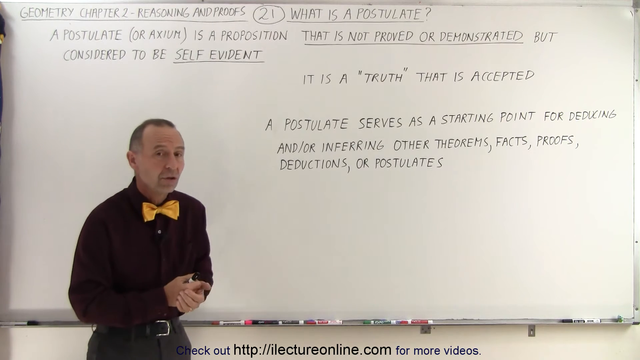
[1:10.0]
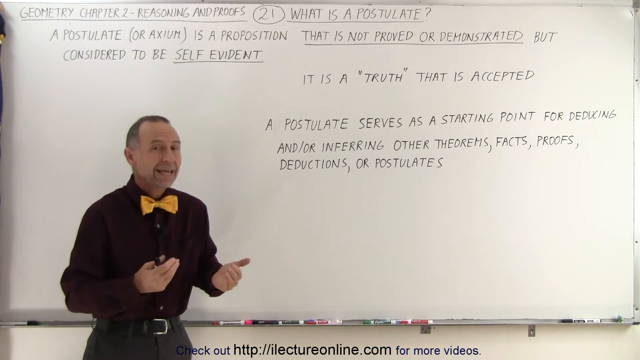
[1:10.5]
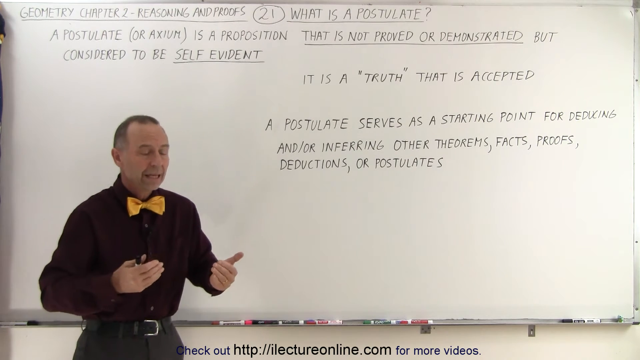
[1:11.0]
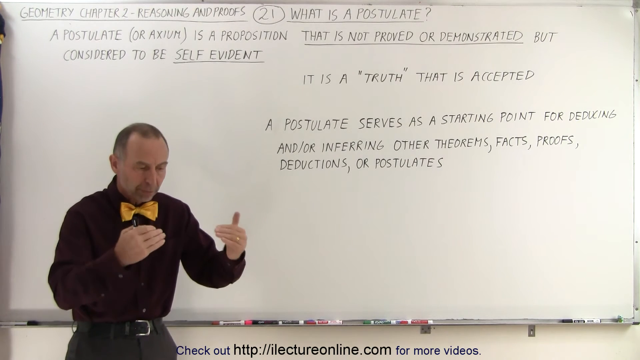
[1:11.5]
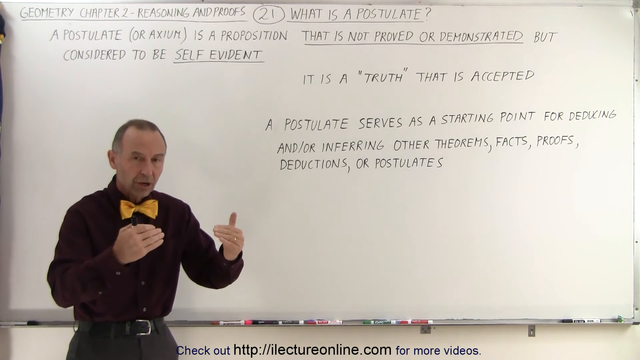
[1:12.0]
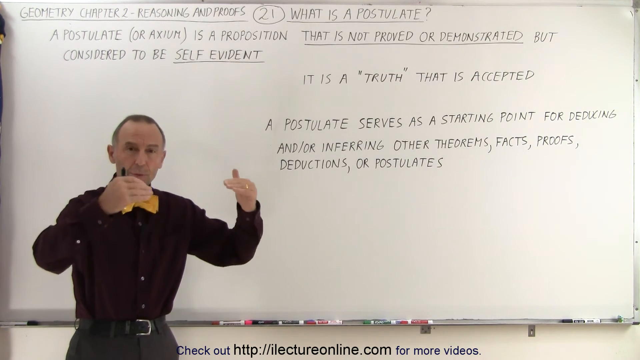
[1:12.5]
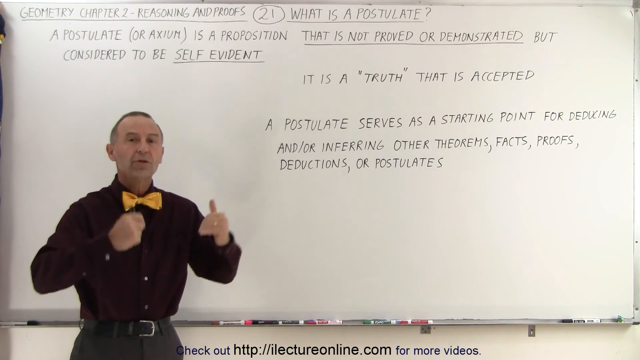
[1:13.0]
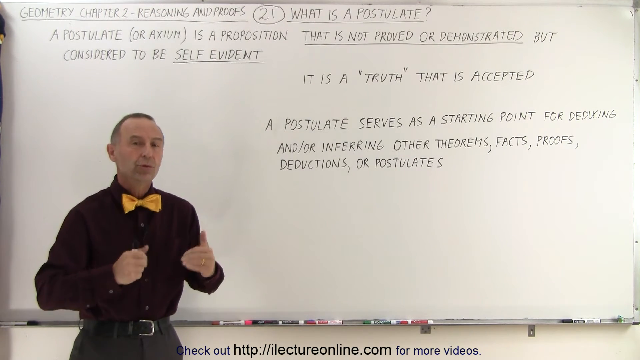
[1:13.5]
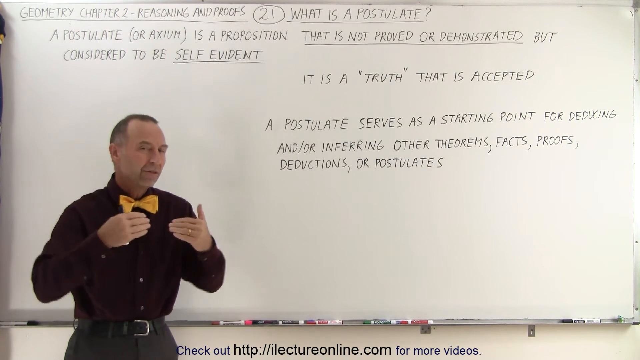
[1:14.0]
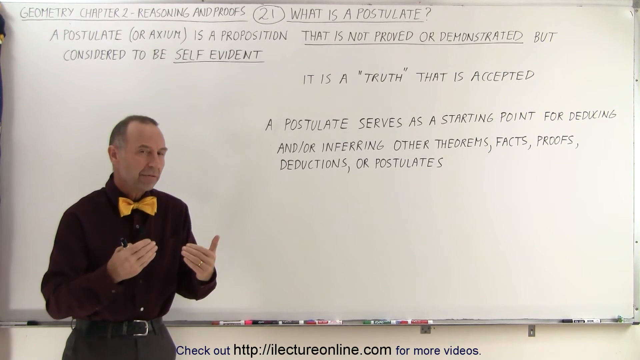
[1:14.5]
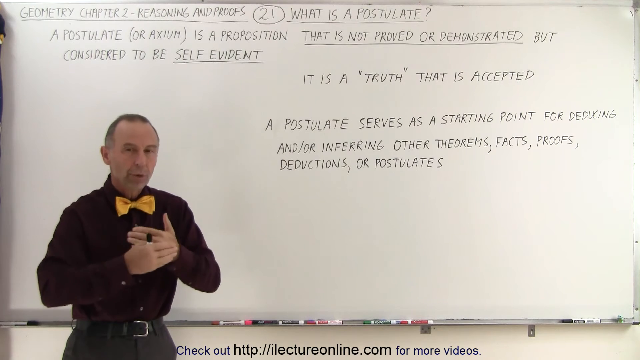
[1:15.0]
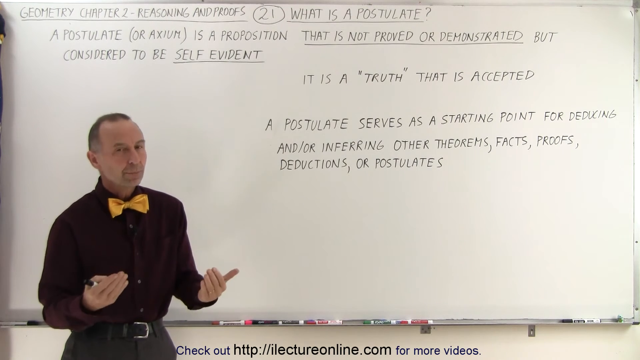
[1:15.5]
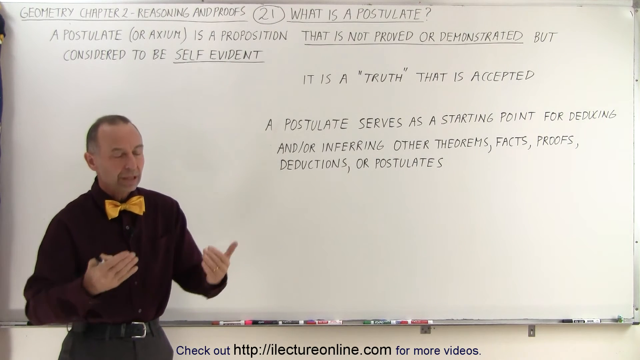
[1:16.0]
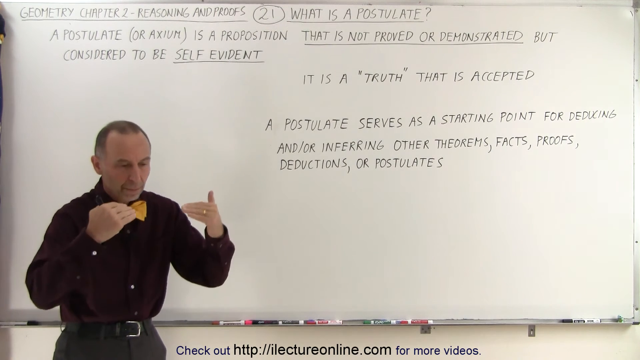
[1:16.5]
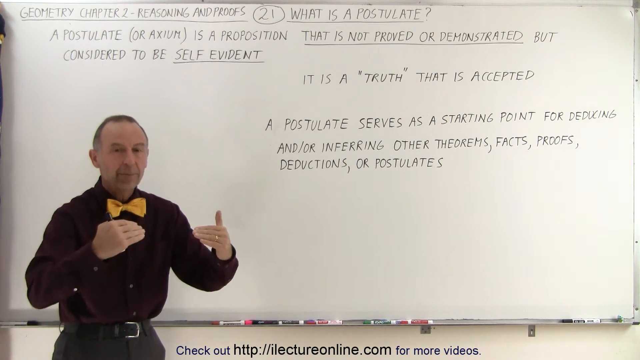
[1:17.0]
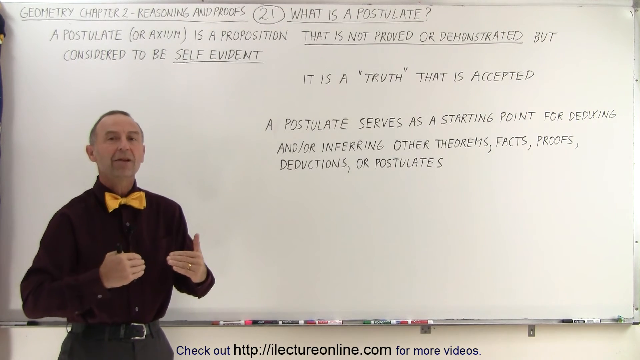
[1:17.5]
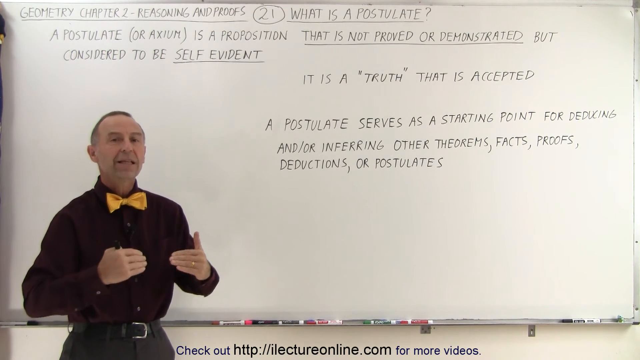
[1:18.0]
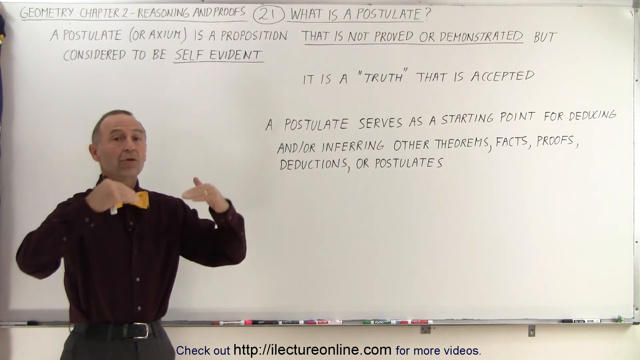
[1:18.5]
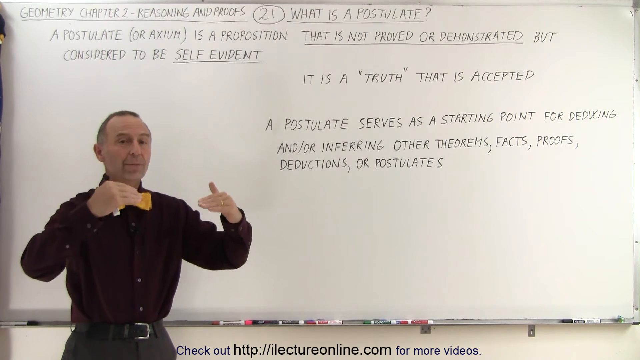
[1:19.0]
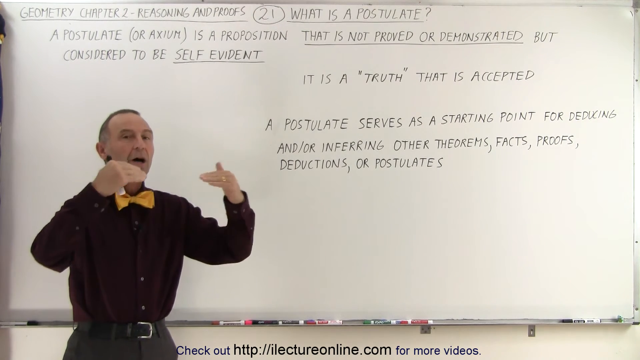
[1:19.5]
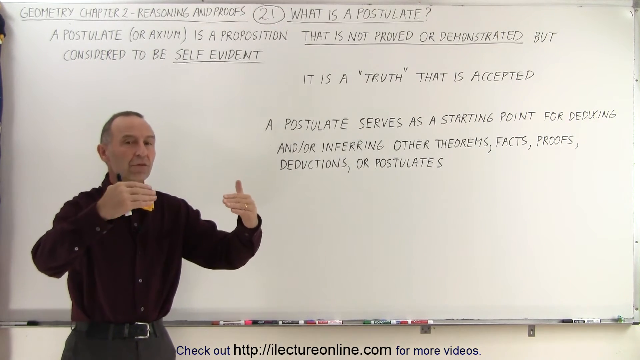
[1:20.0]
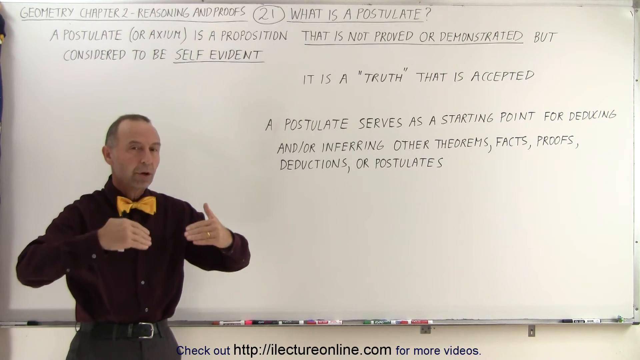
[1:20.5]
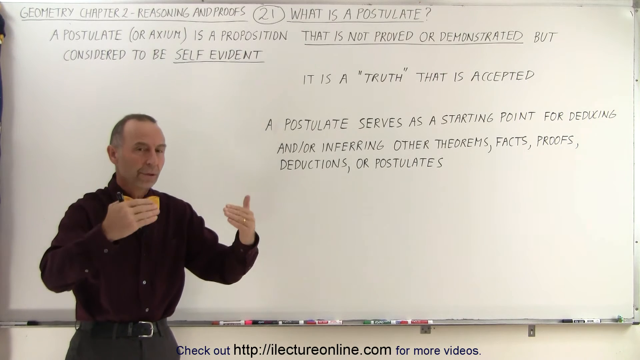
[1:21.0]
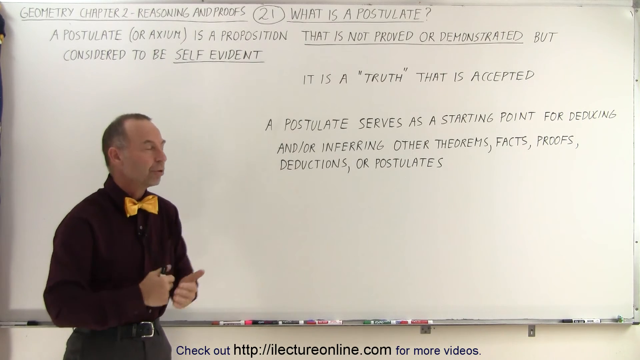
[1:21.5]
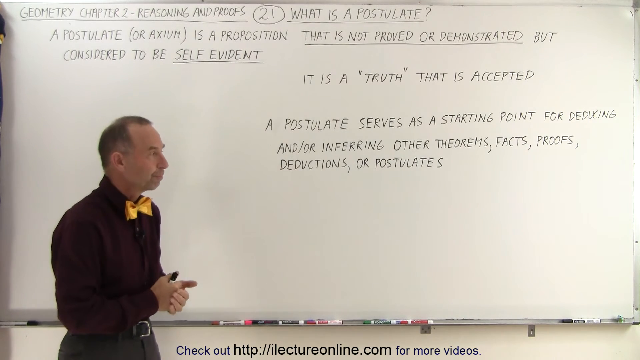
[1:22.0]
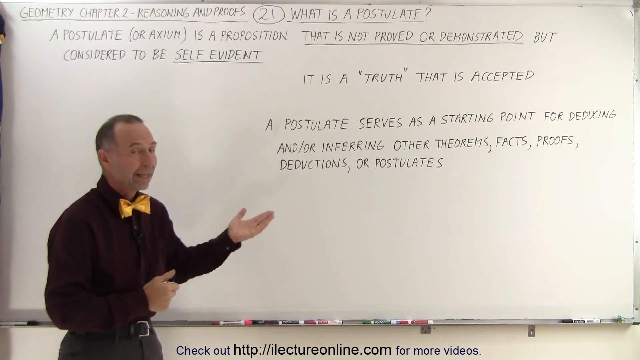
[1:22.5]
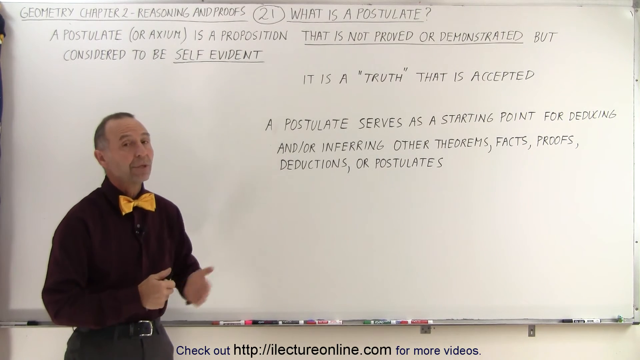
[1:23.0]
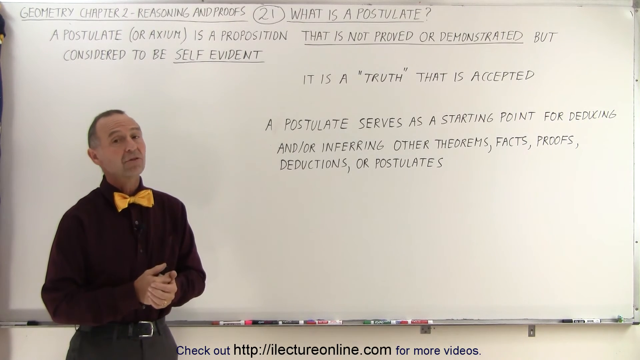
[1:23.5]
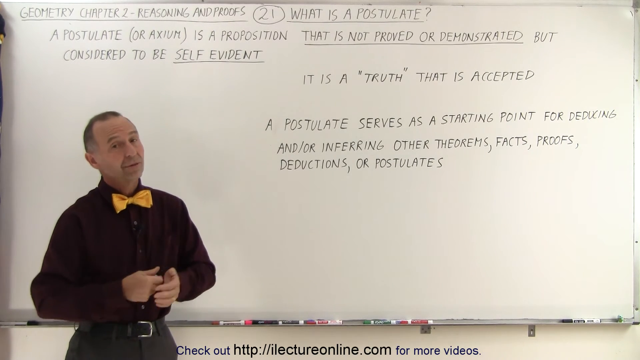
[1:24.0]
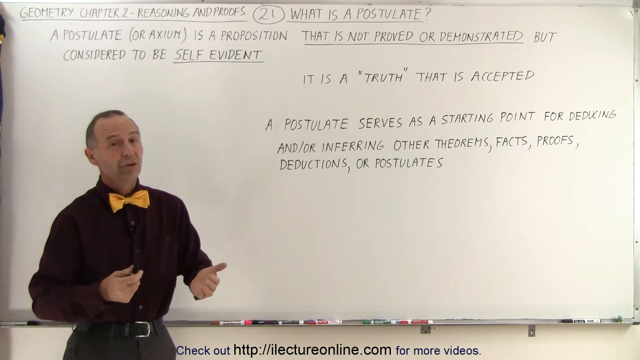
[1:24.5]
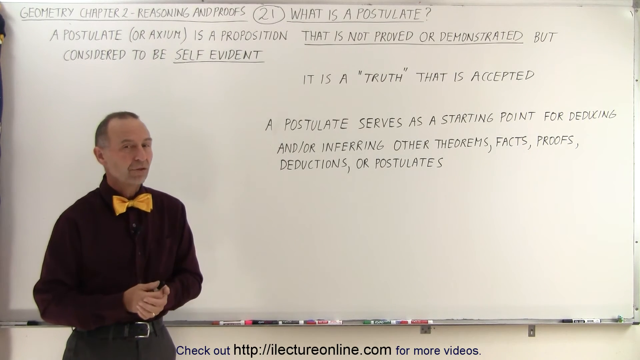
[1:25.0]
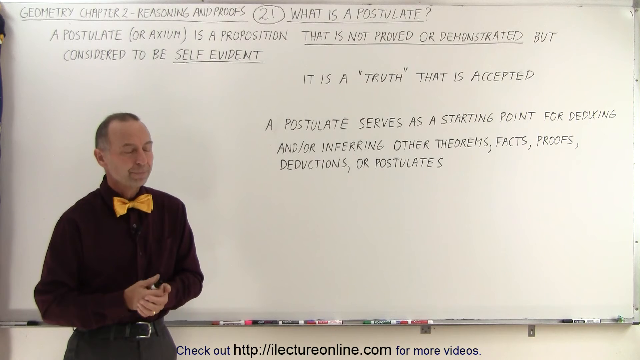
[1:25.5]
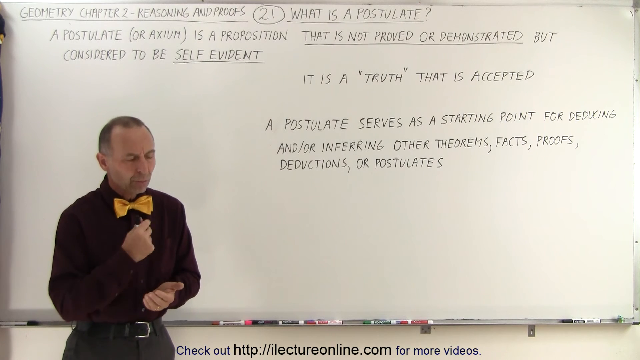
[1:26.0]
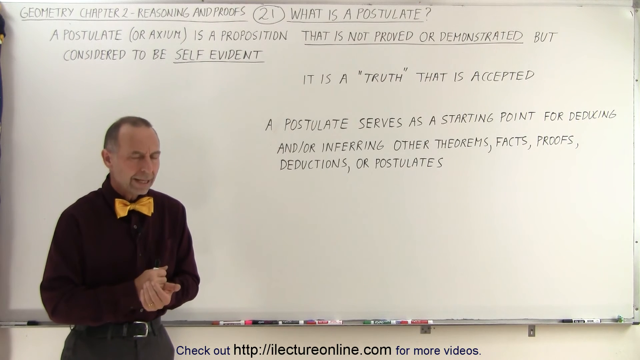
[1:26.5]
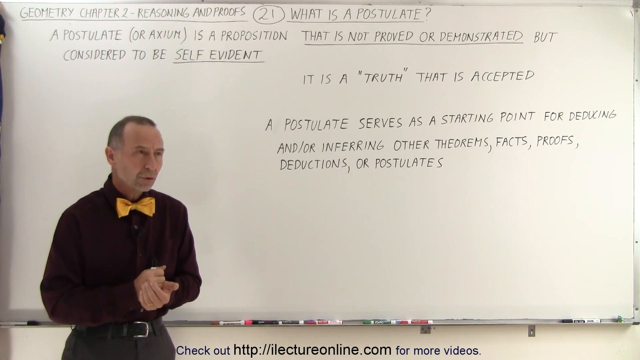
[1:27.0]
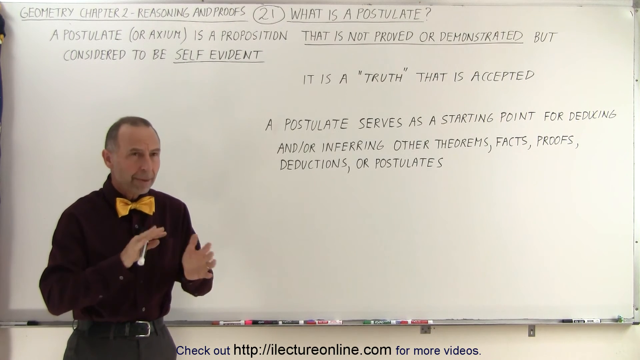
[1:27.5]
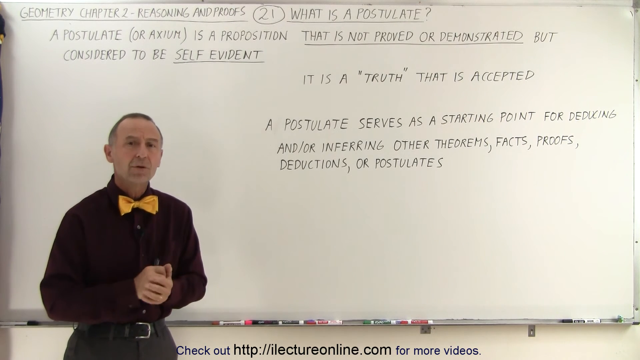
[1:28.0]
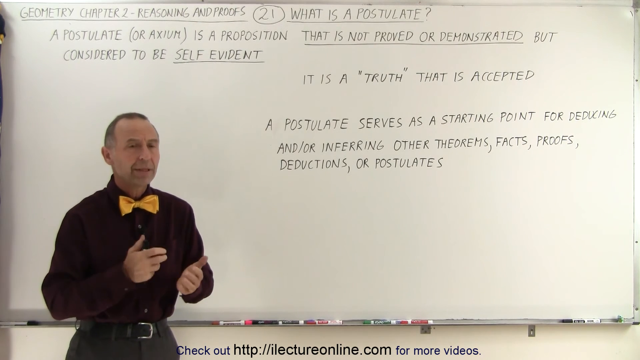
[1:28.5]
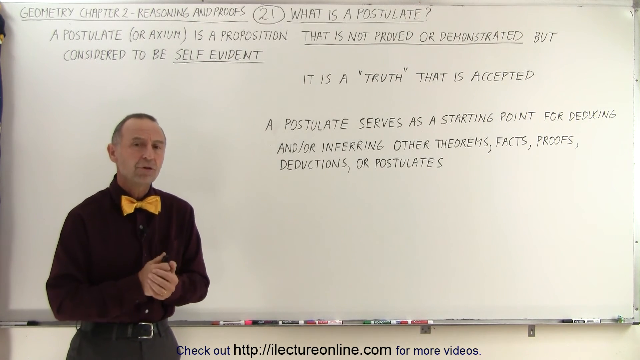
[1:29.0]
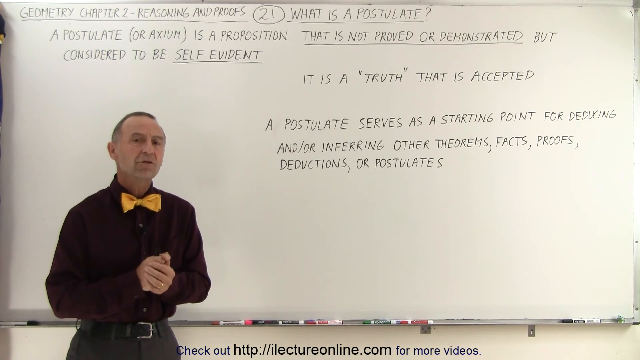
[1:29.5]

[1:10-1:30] The man stands at the whiteboard in his black shirt, black pants and orange bow tie. He has very short hair, a buzz cut. The board shows geometry and postulates. He talks in front of the whiteboard, gesturing with his hands in front of him, but does not write anything, simply lecturing. He appears to be very in shape.